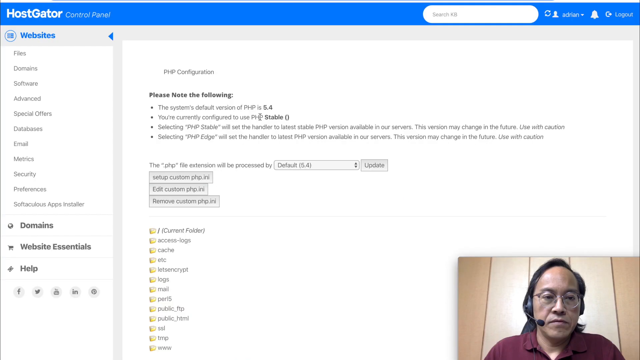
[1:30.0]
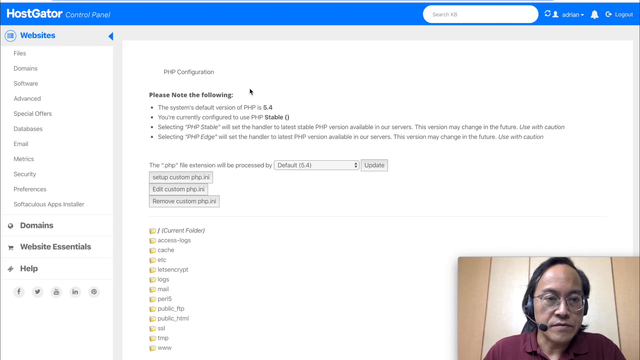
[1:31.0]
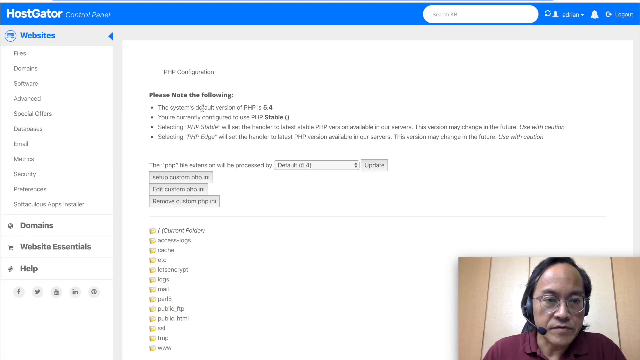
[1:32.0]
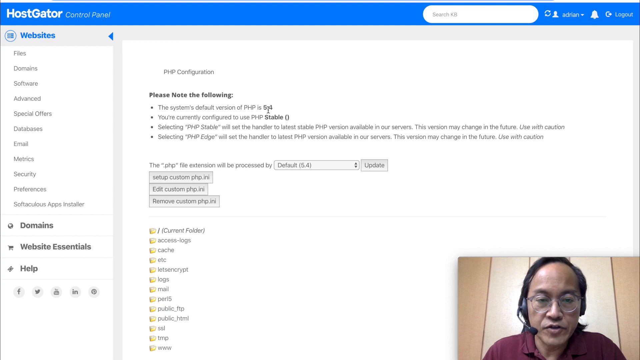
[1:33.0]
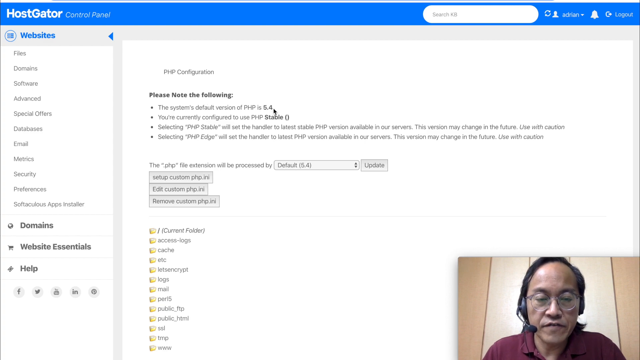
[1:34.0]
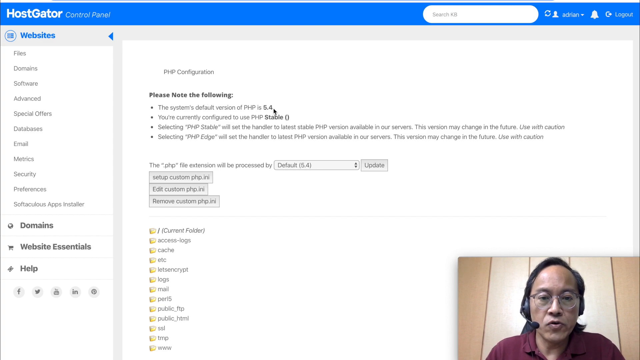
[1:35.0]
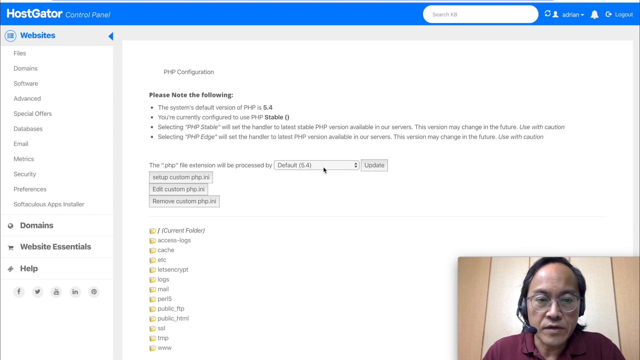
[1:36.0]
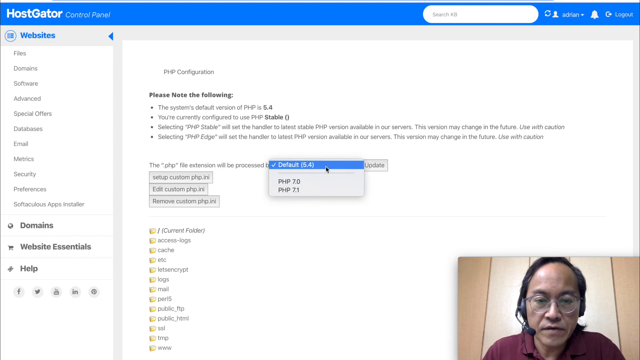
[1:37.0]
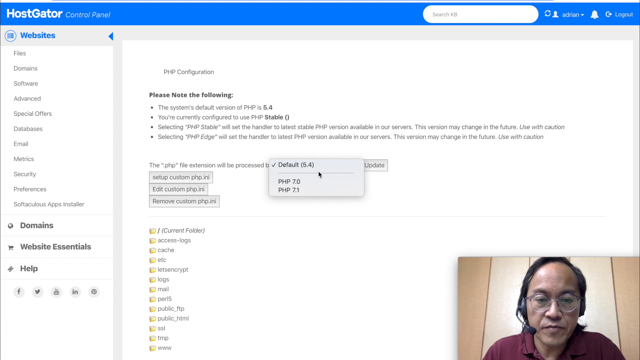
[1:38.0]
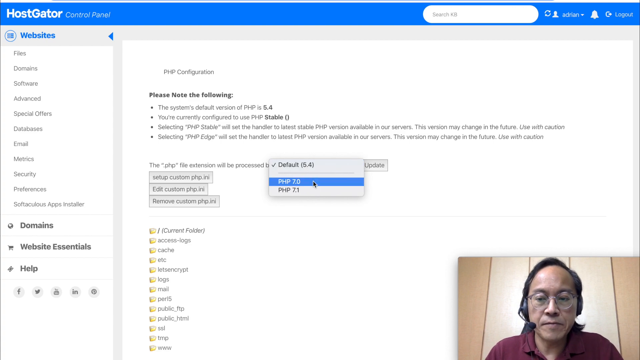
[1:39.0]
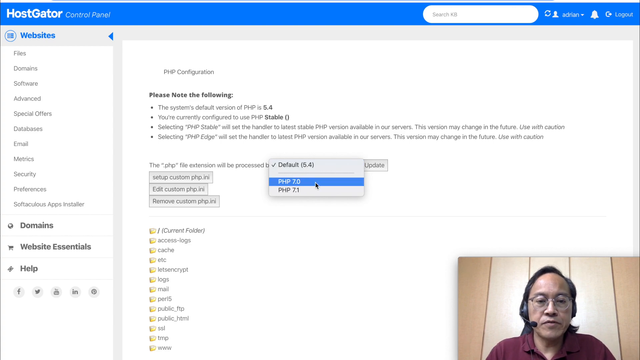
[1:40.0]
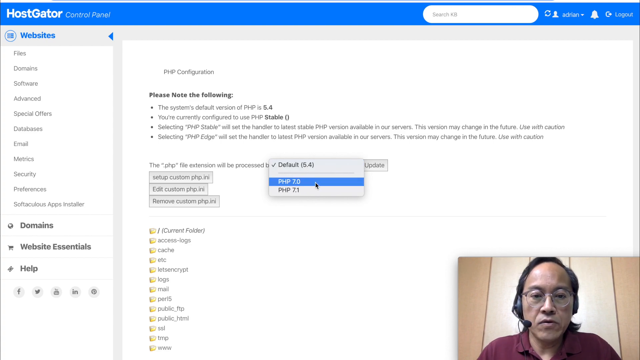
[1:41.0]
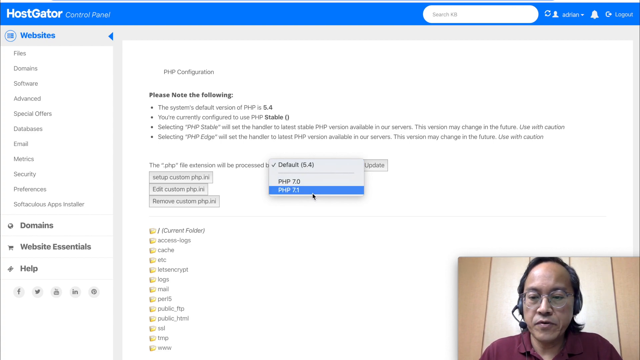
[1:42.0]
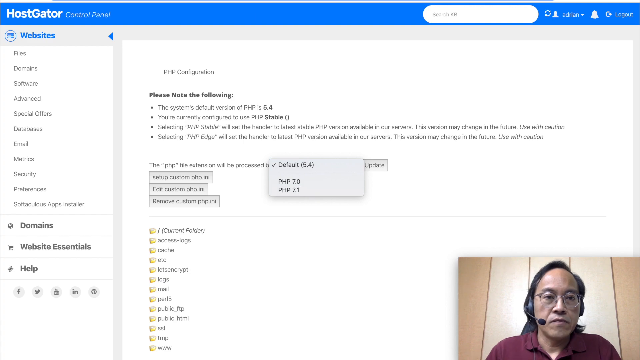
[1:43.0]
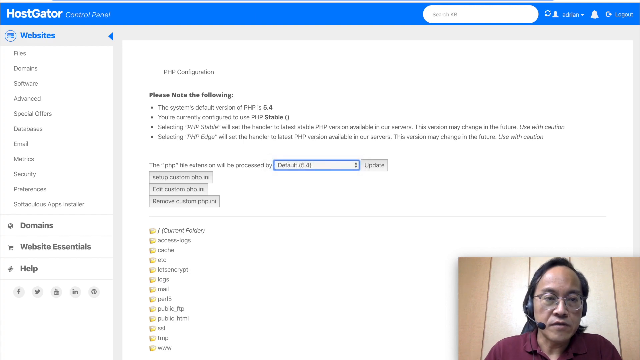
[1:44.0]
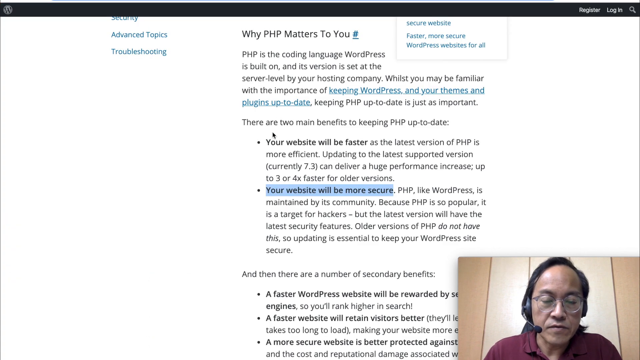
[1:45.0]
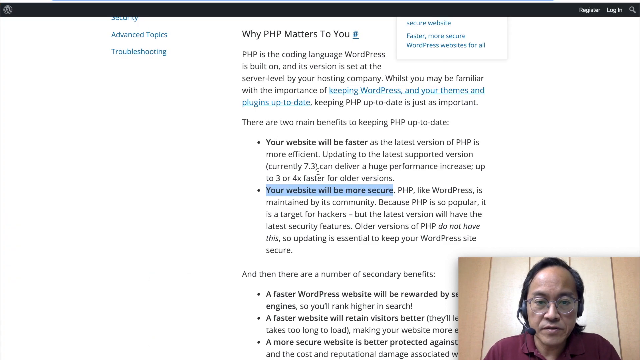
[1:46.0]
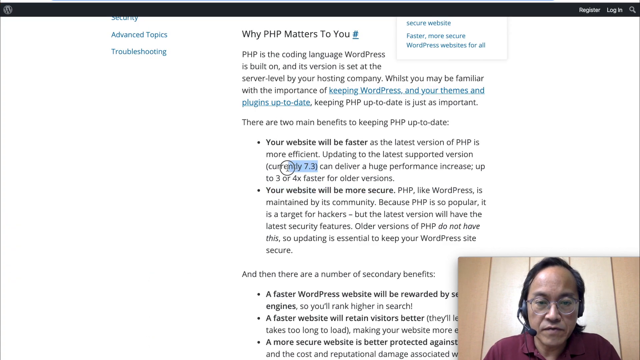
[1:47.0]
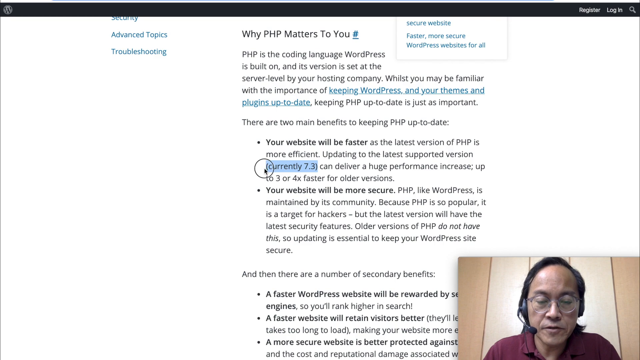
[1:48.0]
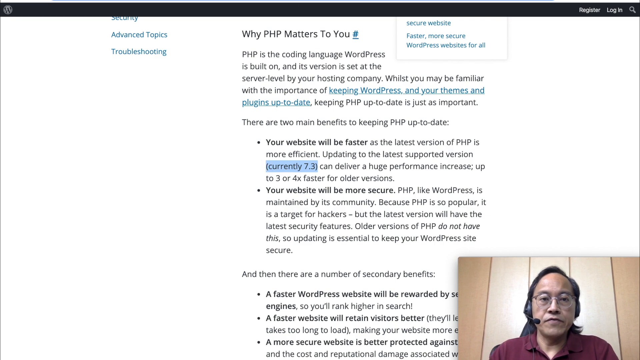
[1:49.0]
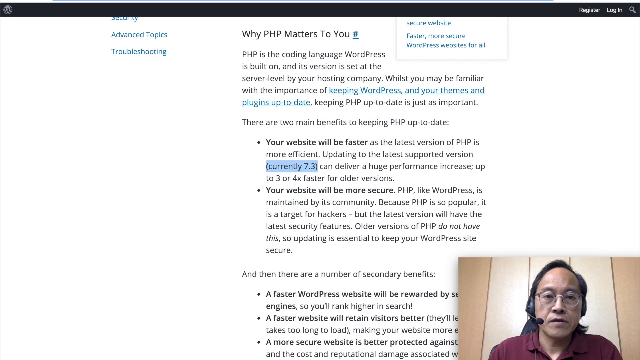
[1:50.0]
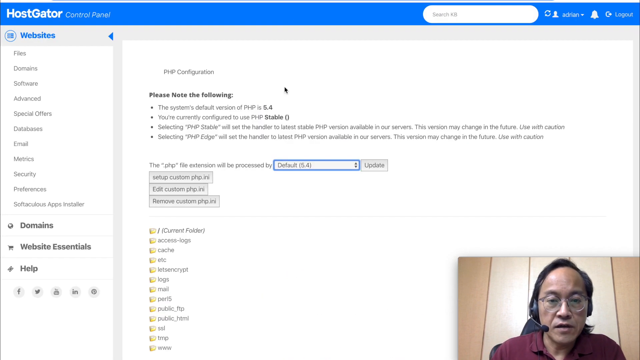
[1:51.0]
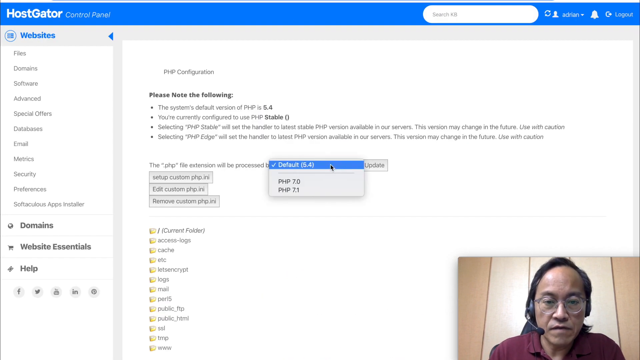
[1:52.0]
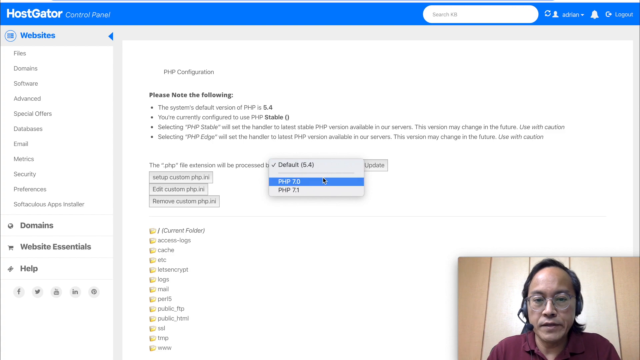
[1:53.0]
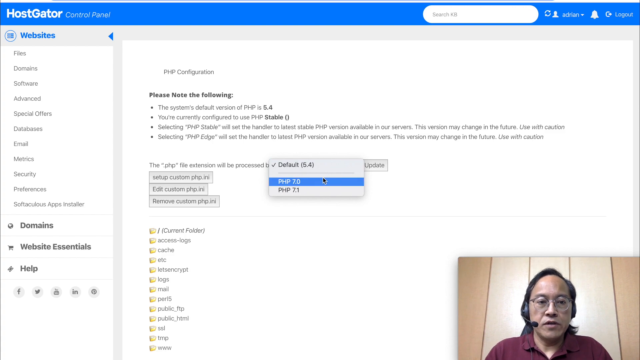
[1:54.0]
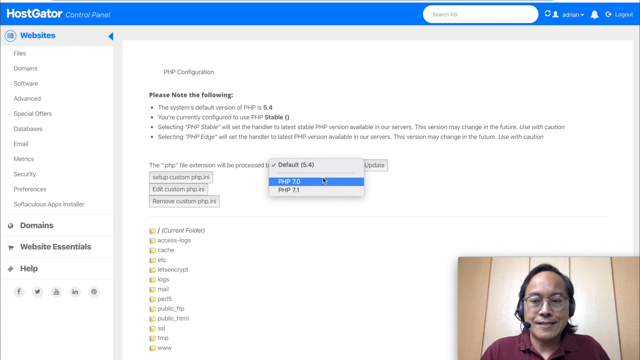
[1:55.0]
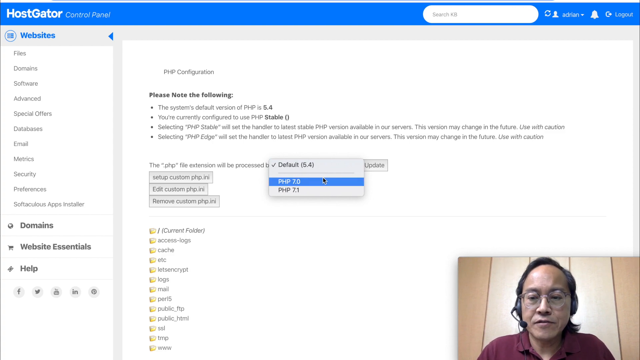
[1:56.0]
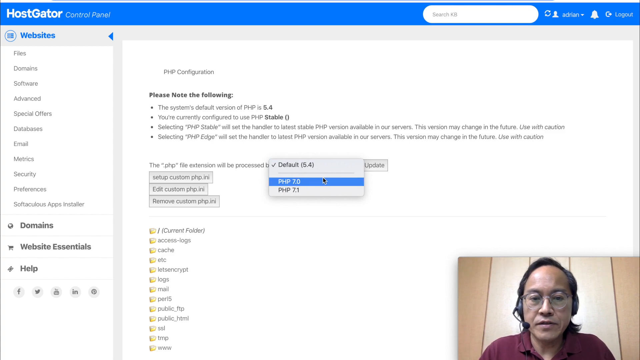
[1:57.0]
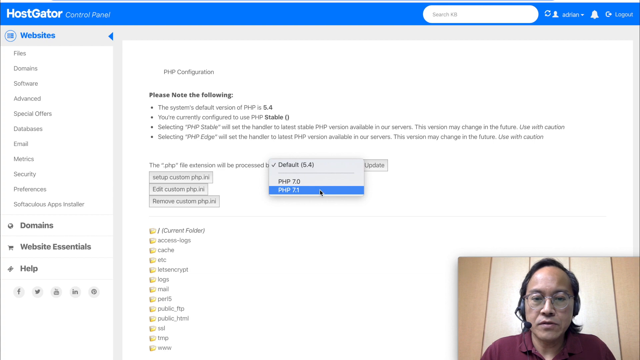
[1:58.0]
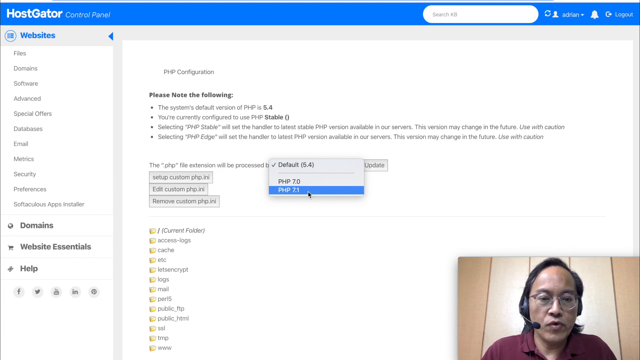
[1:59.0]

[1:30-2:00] A man appears at the bottom of the screen, apparently on a webcam. He wears a black headset, glasses and a maroon shirt, has brunette hair, looks Asian, and is sitting in a room. He is on the HostGator website on a page reading "control panel" and "PHP configuration," looking at the PHP file extension setting with PHP 7.1, but leaves it as the default. He then views a page reading "there are two main benefits to keeping PHP up to date. One, your website will be faster as the latest version of PHP is more efficient, and your website will be more secure. PHP, like WordPress, is maintained by its community." He highlights "7.3" PHP, then returns to the first page, apparently about to change the PHP.